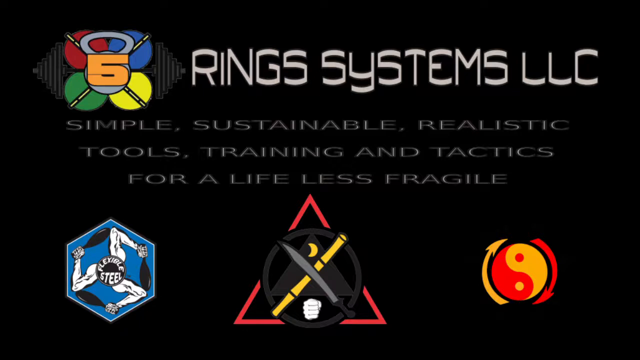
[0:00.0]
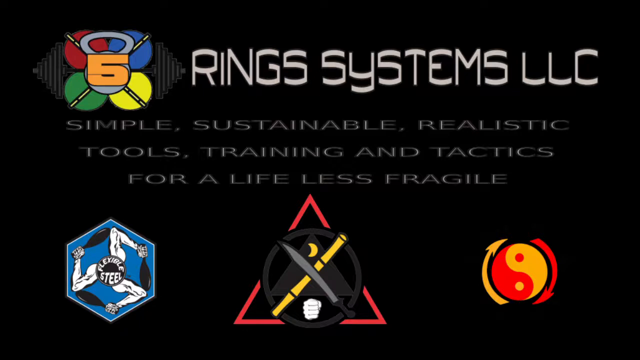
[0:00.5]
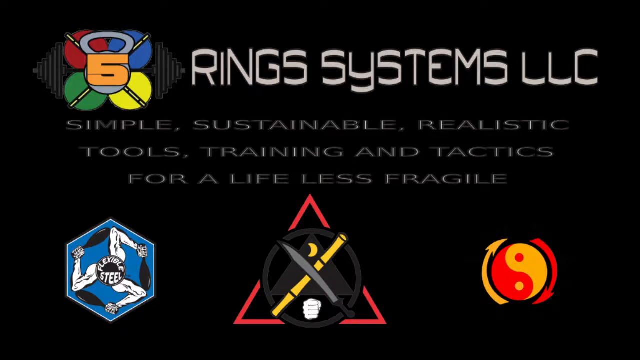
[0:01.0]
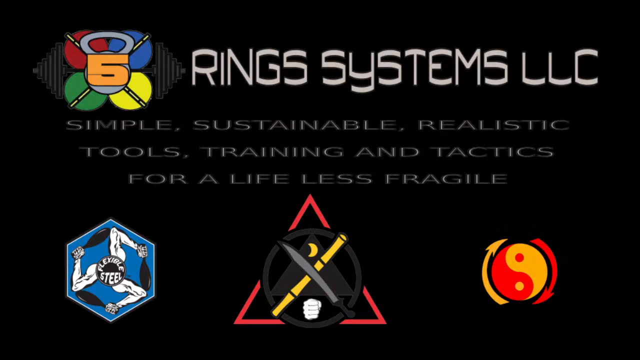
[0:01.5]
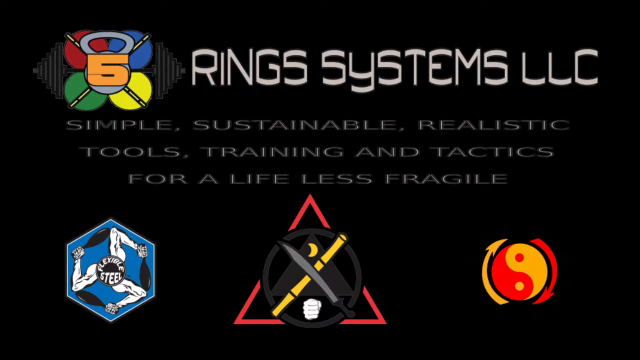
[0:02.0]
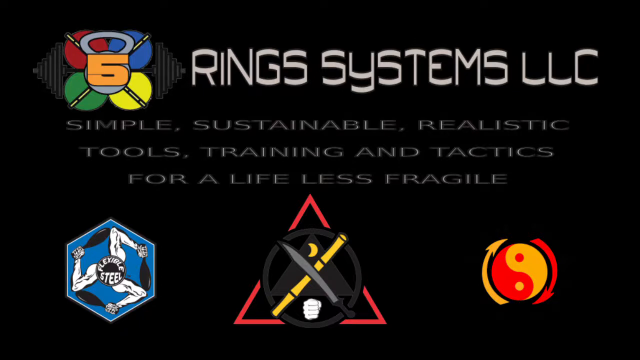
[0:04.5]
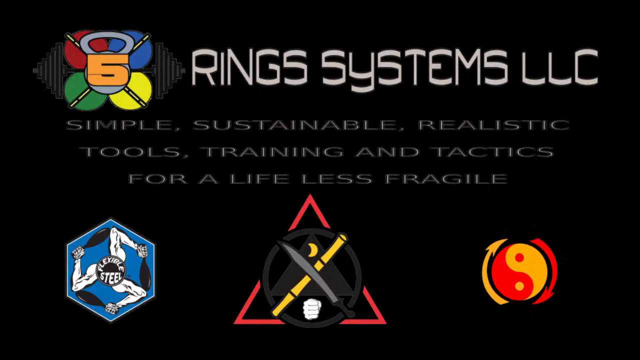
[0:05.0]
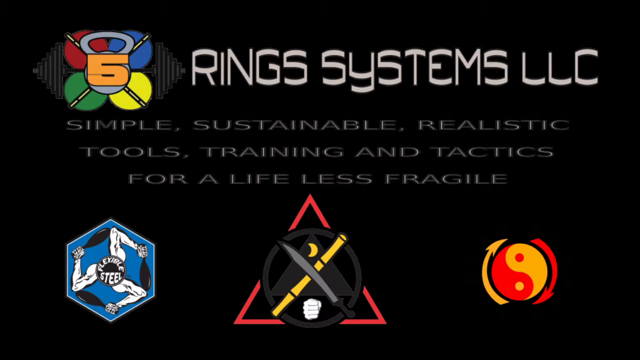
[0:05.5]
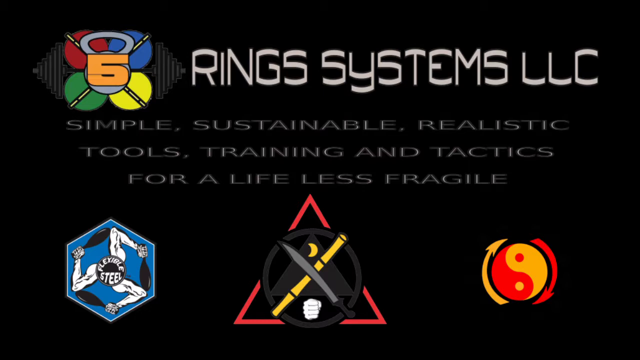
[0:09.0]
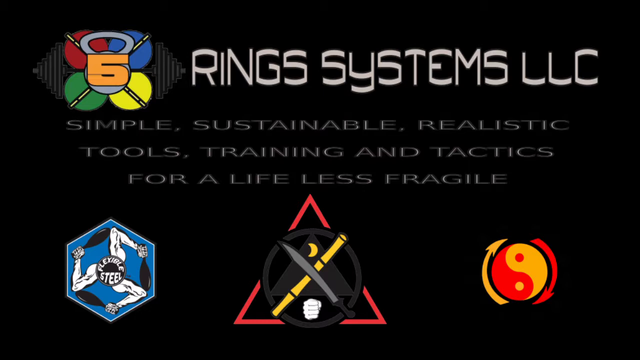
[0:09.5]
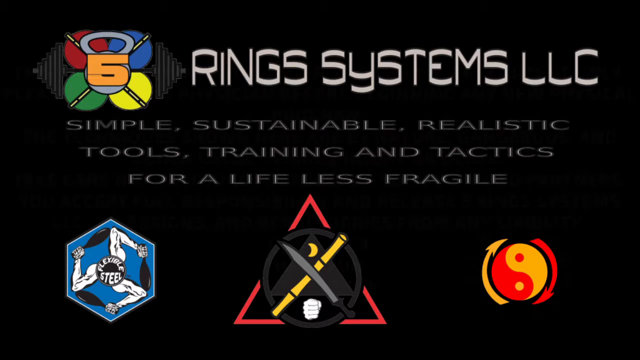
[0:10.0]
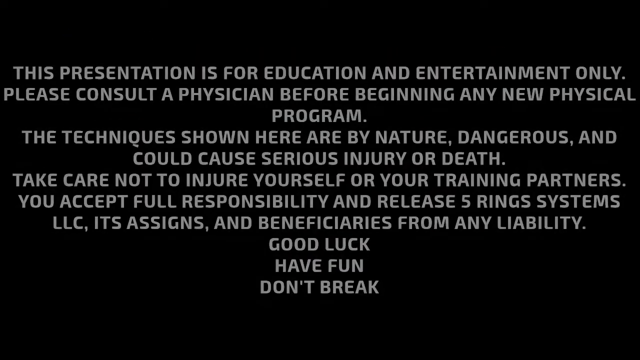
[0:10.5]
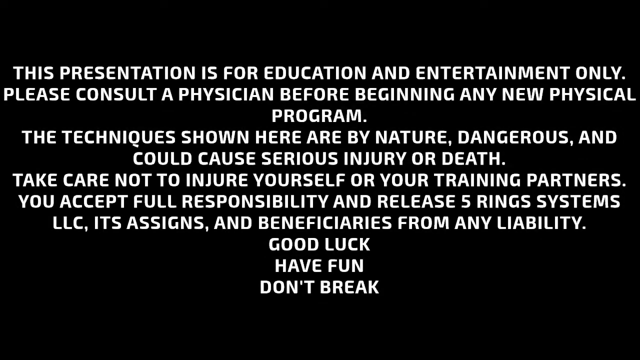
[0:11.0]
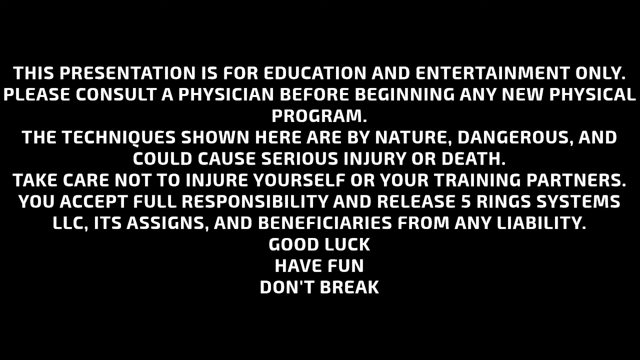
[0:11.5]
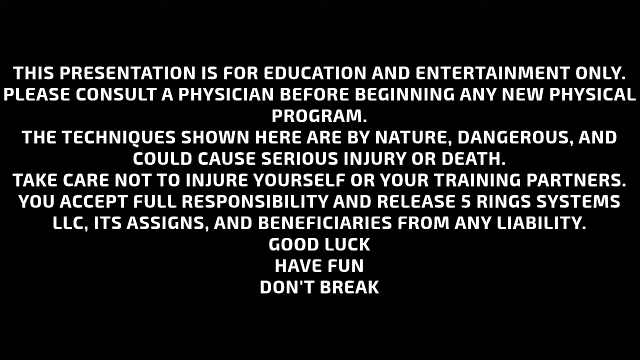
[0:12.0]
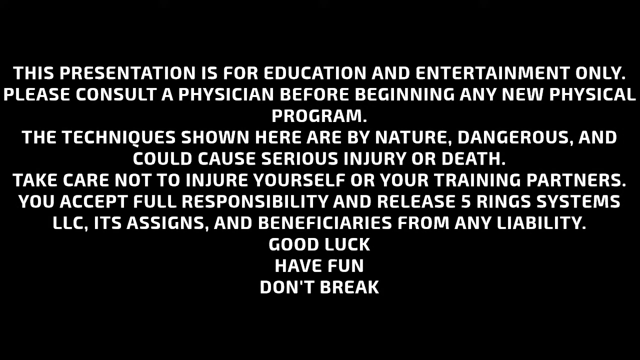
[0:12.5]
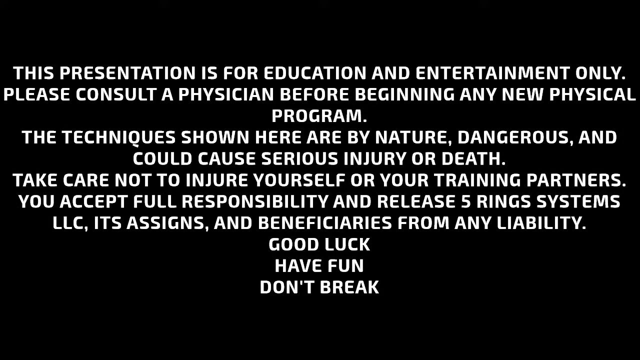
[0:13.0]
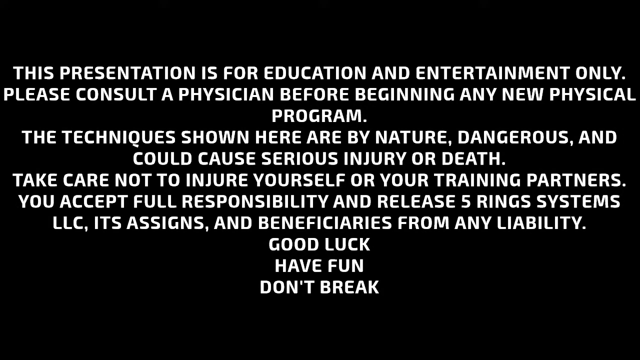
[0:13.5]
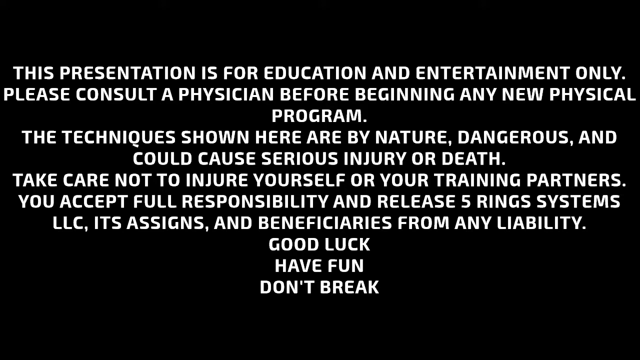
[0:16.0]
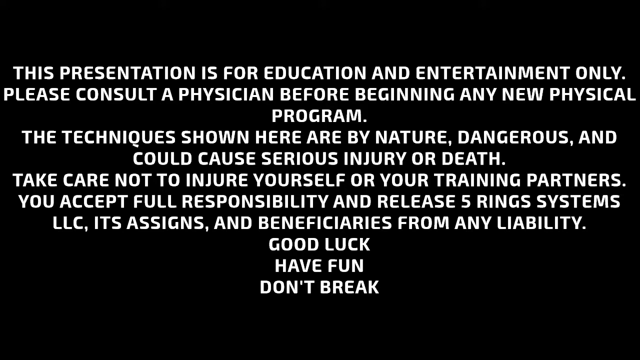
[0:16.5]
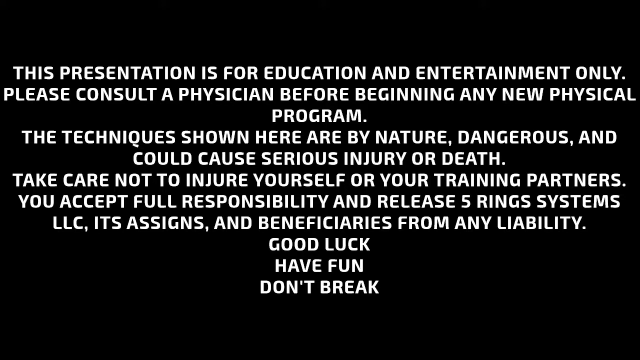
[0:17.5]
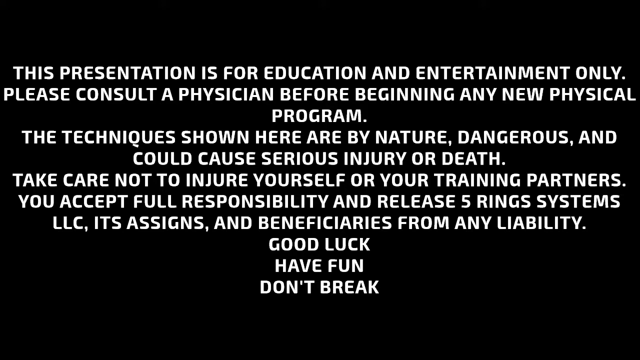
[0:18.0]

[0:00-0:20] The video opens on a black background with white text. At the top of the screen, in white text, is "Rings Systems LLC." To the left of that is a logo, presumably for this company, with four circles arranged in a grid: the top left is red, the top right is blue, the lower left is green and the lower right is yellow. An orange number 5 is over it, with some sort of loopy, light blue shape beneath the 5, and what look like crossed sticks behind that, above the circles. To either side is a series of vertical lines forming a triangle shape. Beneath that, text reads "simple, sustainable, realistic tools, training, and tactics for a life less fragile." Beneath that are three additional logos. The first is a blue hexagon with three white arms arranged in it, each arm holding a club or a bowling pin, and a circle in the middle that says "flexible steel" in white text. Next is a red triangle with a blue circle above it; a sword and a bamboo stick are crossed in the middle, the stick yellow and the sword with a gray blade and a darker gray handle. There is a fist pointing out toward the viewer, a triangle beneath that, and a yellow moon between the crossed weapons. To the right of that is an orange and yellow yin-yang symbol with arrows moving around it. This stays on screen briefly, and then a warning message appears: on the same black field, white text reads "this presentation is for education and entertainment only. Please consult a physician before beginning any new physical program. The techniques shown here are, by nature, dangerous and could cause serious injury or death. Take care not to injure yourself or your training partners. You accept full responsibility and release five ring systems, LLC, its assigns, and beneficiaries from any liability. Good luck, have fun, don't break." The warning remains on screen for the rest of the shot.